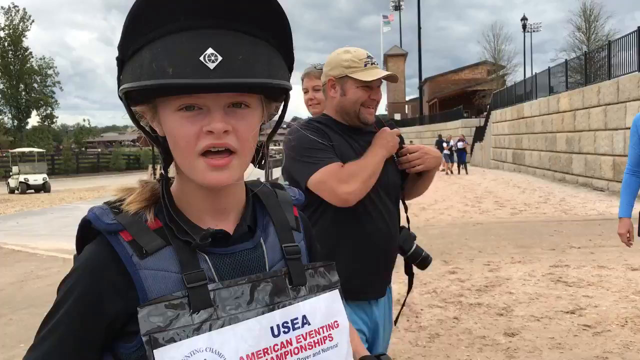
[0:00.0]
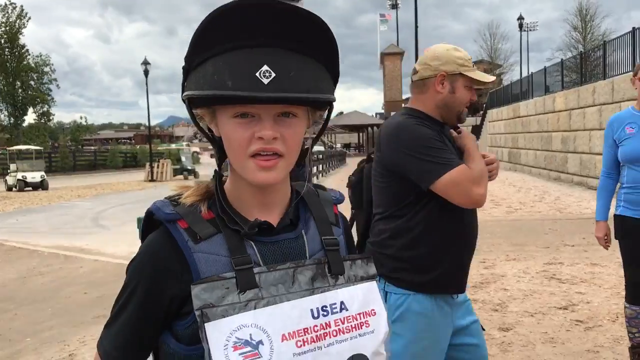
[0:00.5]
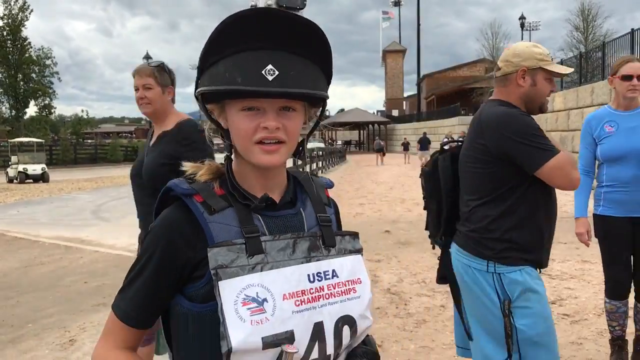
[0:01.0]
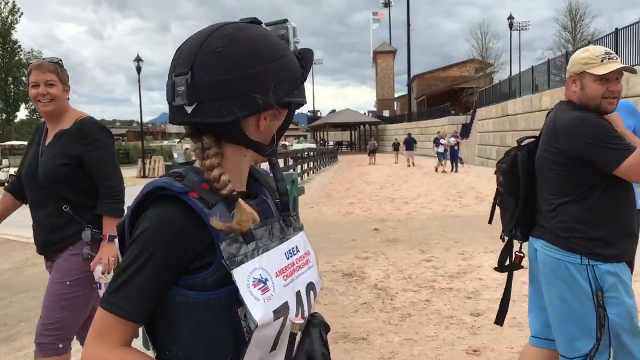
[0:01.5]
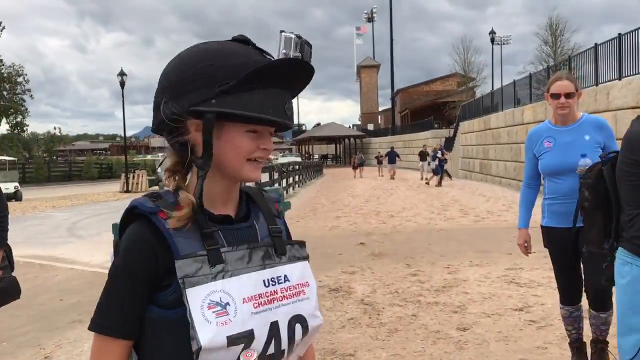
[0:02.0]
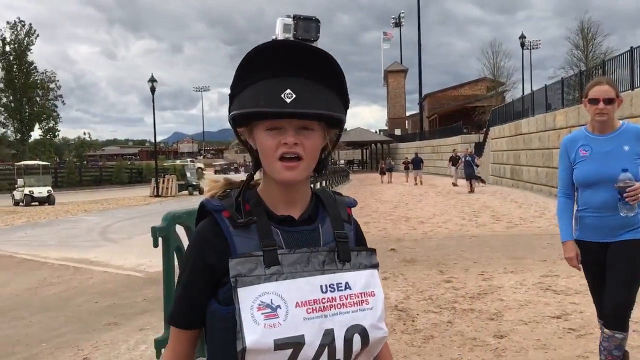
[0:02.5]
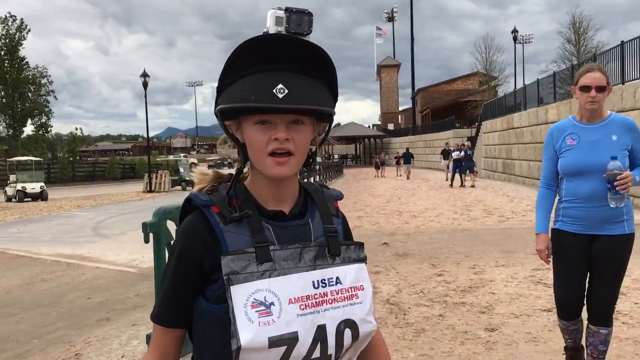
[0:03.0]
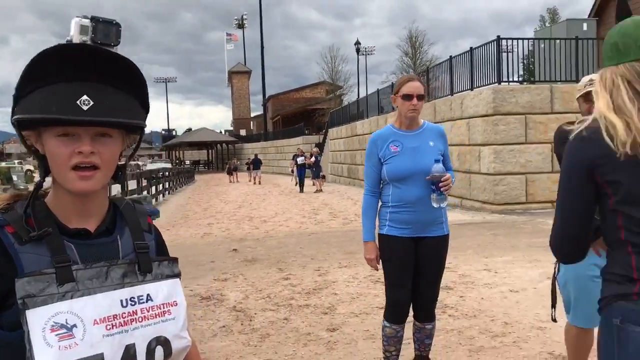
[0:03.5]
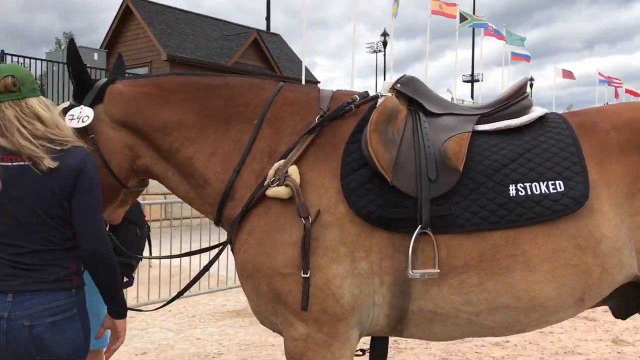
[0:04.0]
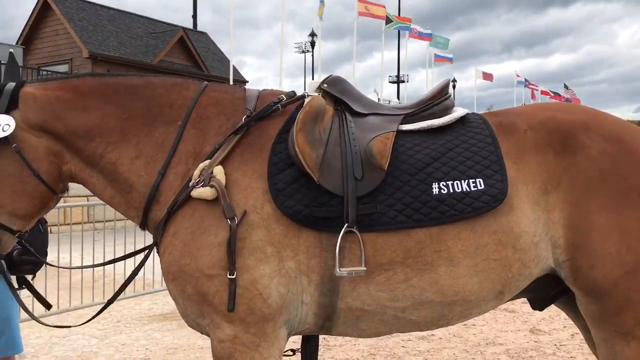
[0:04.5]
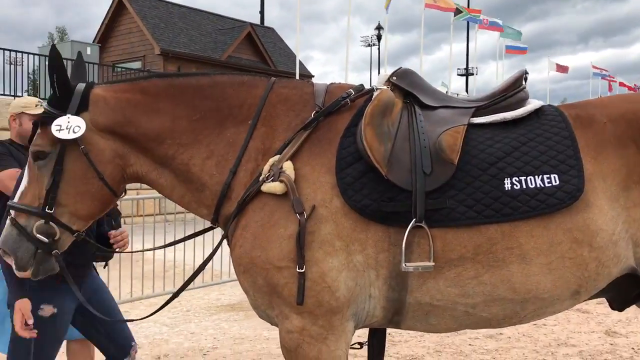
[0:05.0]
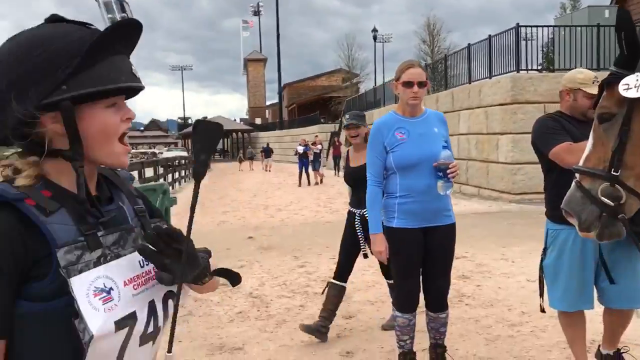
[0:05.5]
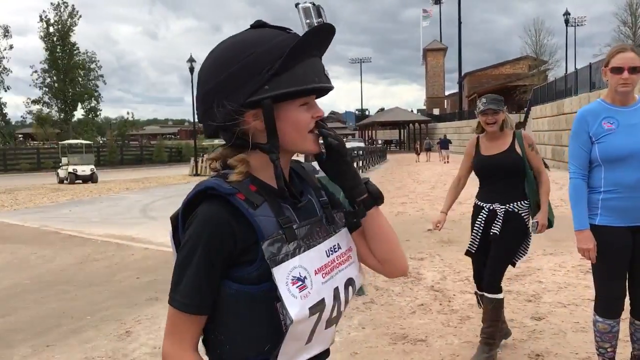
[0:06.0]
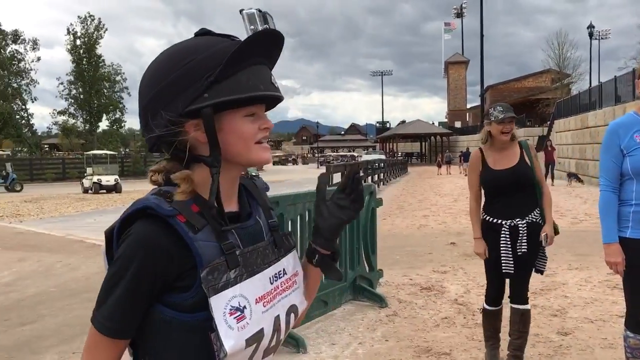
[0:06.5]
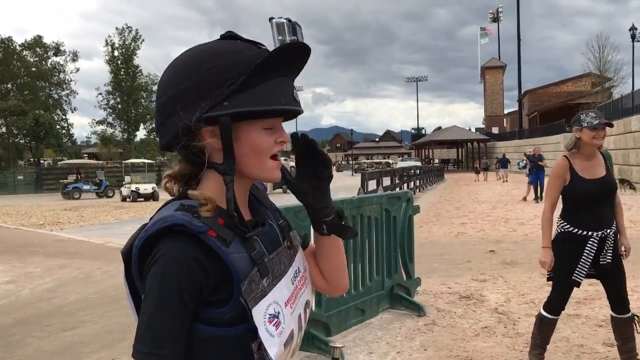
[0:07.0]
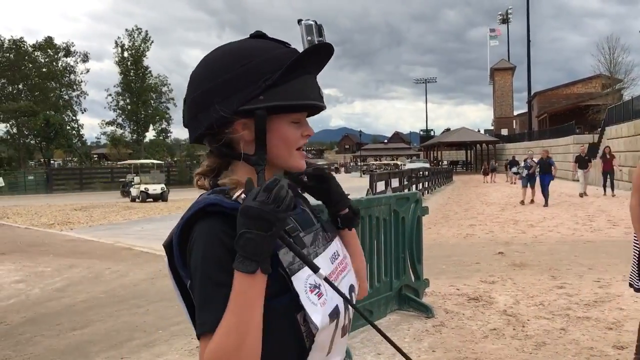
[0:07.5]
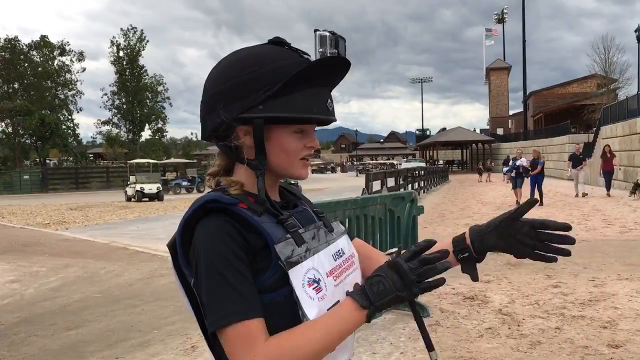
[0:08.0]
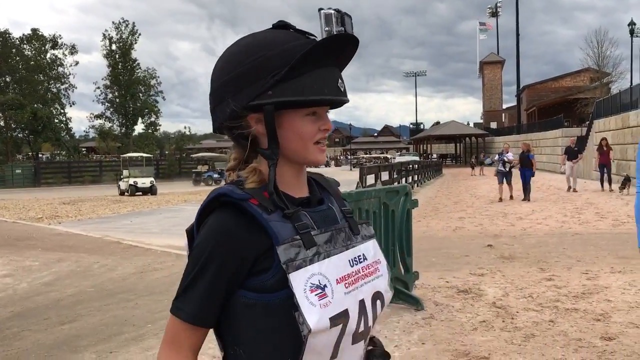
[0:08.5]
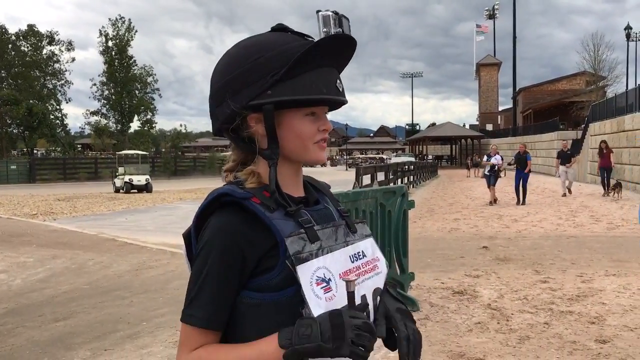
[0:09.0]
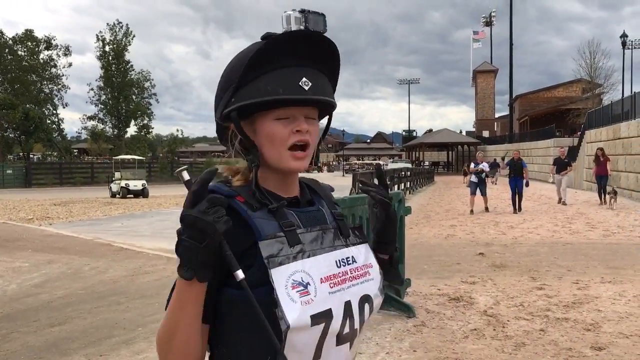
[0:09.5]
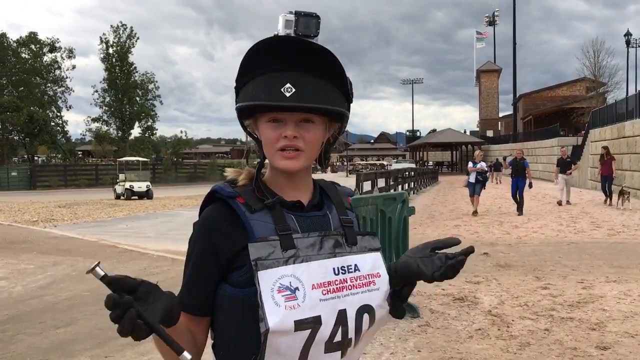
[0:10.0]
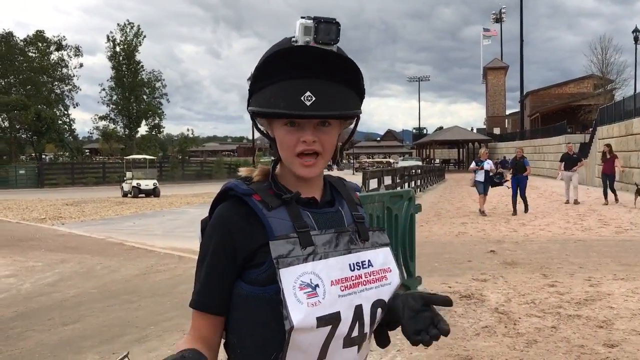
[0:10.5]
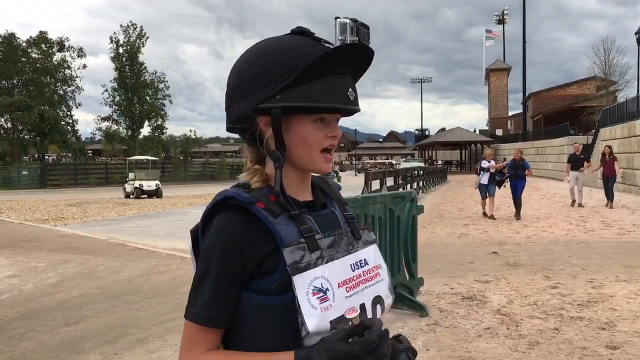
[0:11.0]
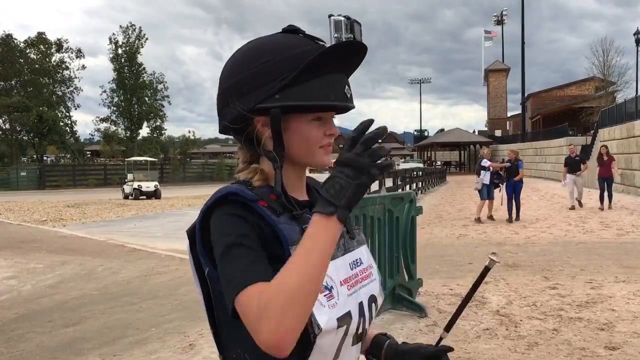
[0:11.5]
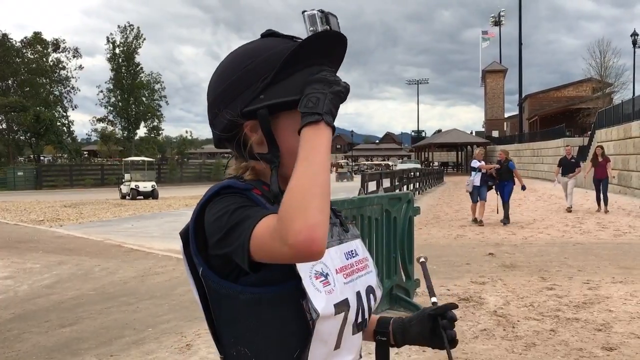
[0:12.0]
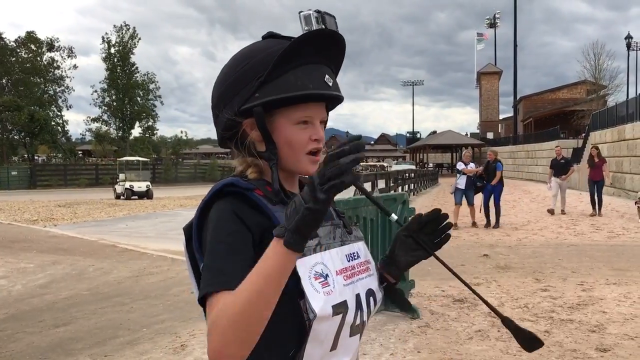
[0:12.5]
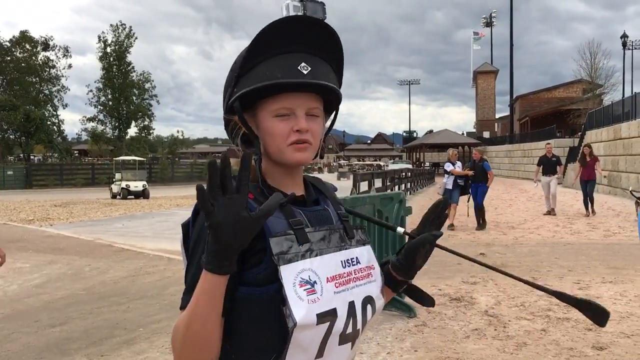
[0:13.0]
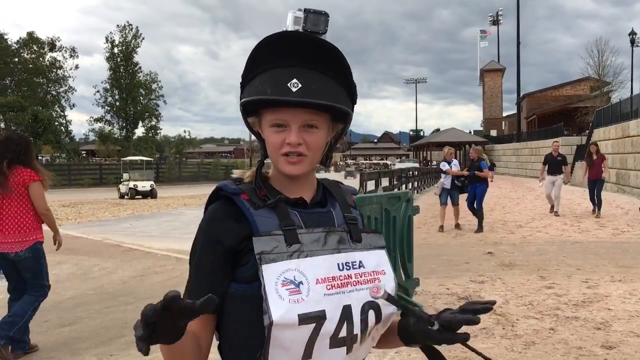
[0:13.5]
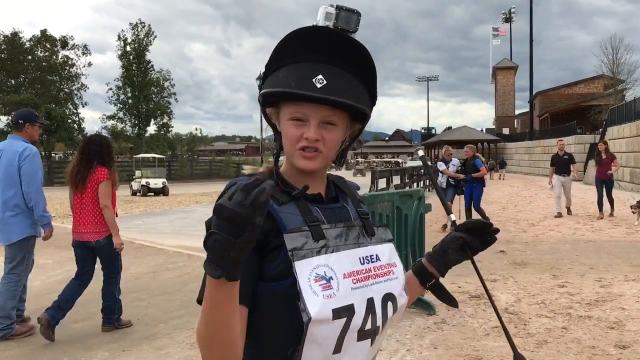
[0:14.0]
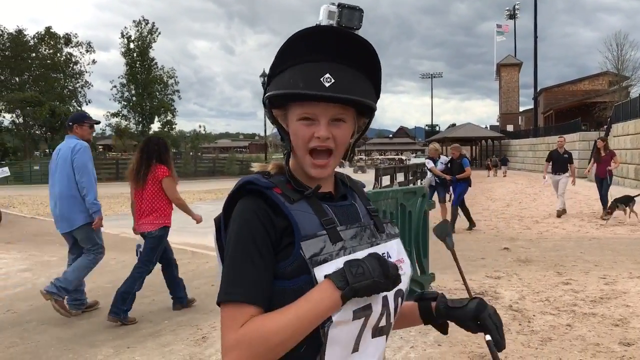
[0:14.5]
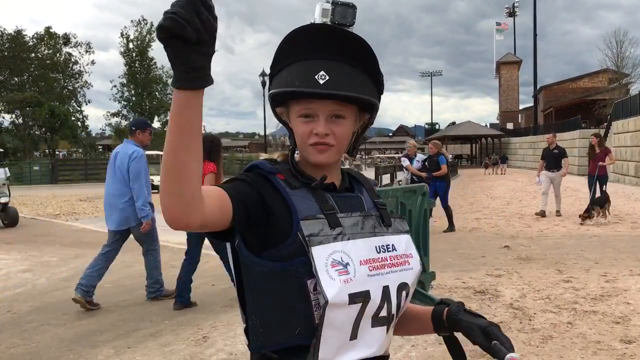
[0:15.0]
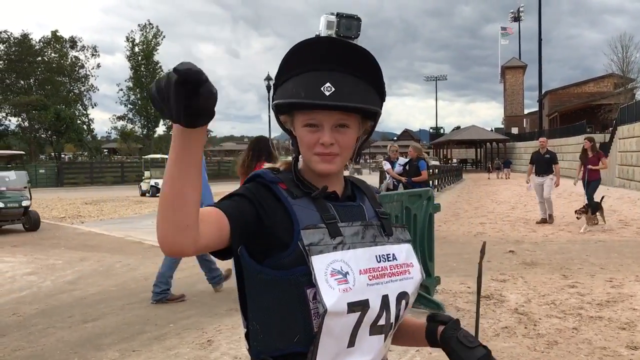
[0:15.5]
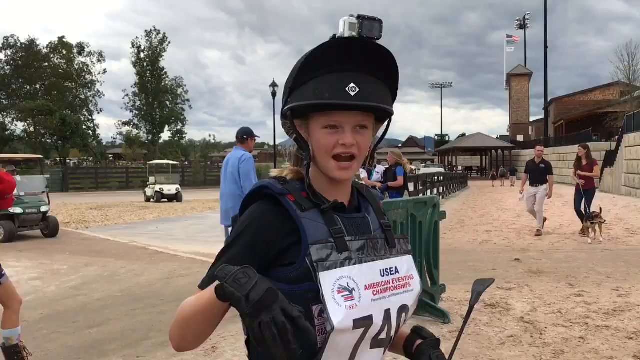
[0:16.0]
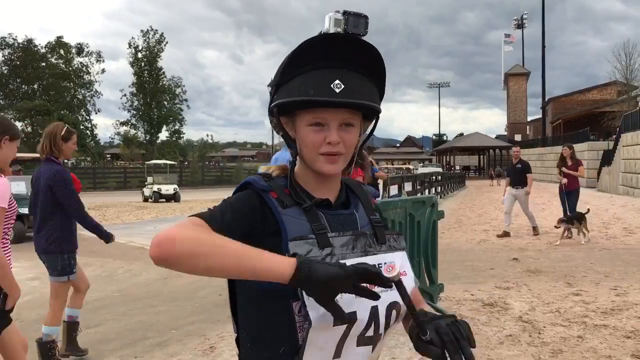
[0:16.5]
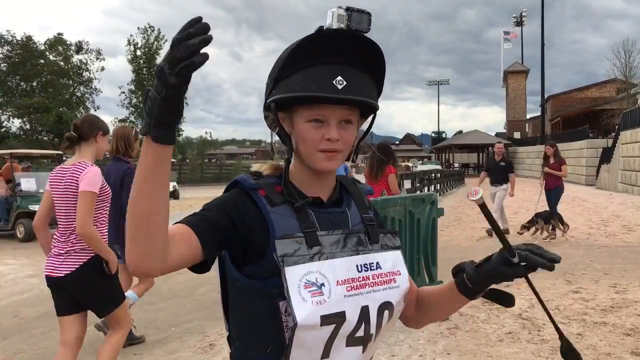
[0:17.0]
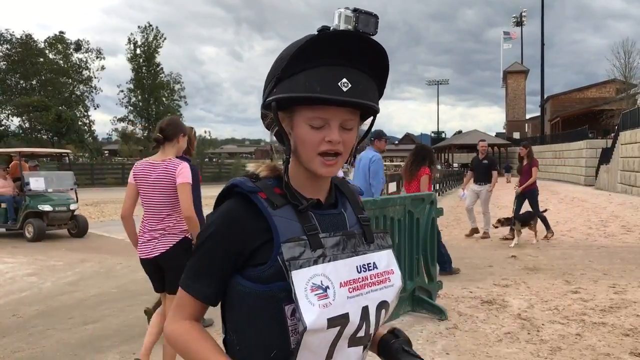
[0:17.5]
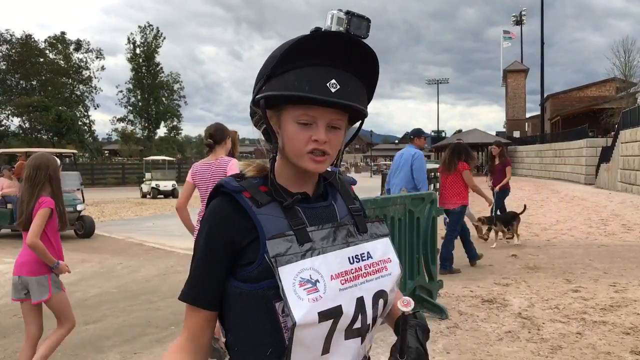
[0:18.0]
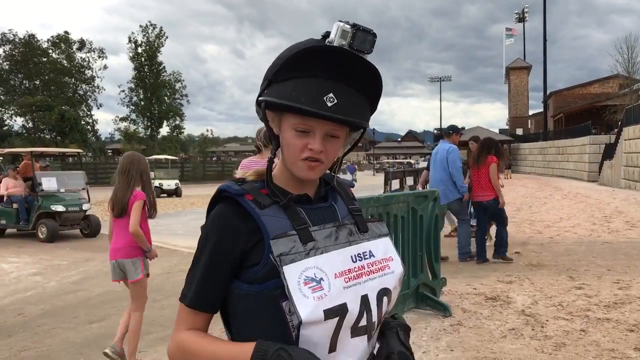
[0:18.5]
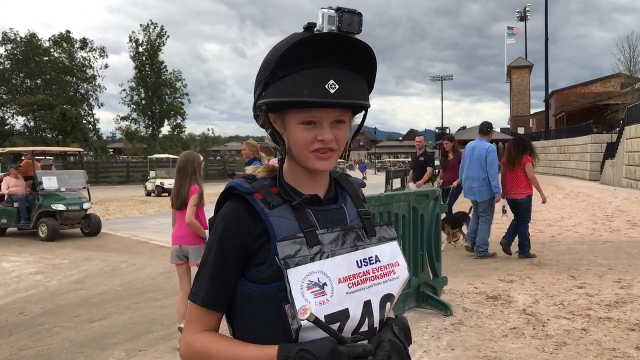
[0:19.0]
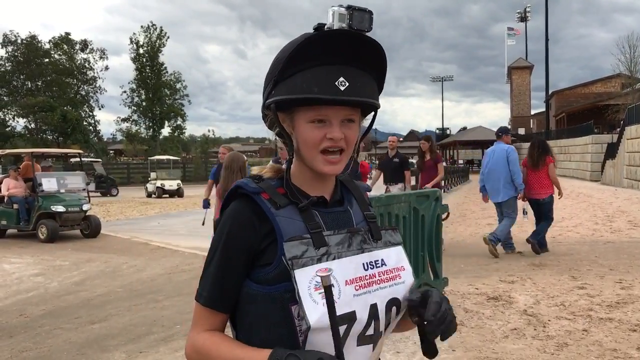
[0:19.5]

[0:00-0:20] A young girl wears some kind of chest armor with a white label clipped over it, and a helmet that at first glance kind of looks like a horse riding helmet. The label on her chest reads "american eventing championships" and "740". She holds a riding crop in her right hand. The camera pans to the right, revealing a large brown horse with a saddle bearing white text that reads "#stoked". Two people are standing attending to the horse at its head: a woman in all blue, holding something in her left hand, stands looking at the camera, and then a woman wearing a camouflage hat and a black outfit excitedly pops out from behind the woman in blue, smiling and laughing. The girl in the riding hat and outfit wears black gloves, clearly visible as she lifts her left hand. Some golf carts are in the background. As she talks, she faces side-on towards the horse, expressively lifts her hands, moves her left hand forward towards the horse and brings it back towards her chest, still holding the riding crop in her right hand. She turns to face the camera and opens her hands expressively as she talks to it. A GoPro-style camera is on top of her riding hat. She reaches her right hand up to adjust her helmet, switches the riding crop to her left hand, and keeps gesturing open-handedly to the camera several times. As she talks, she points, opens her hands wide, brings them back together and moves them down, and finally brushes the left side of her face with her left hand.